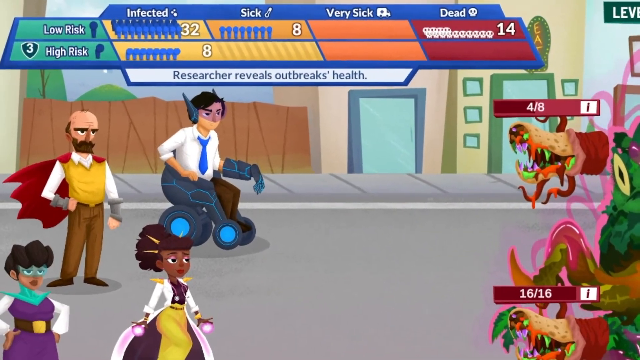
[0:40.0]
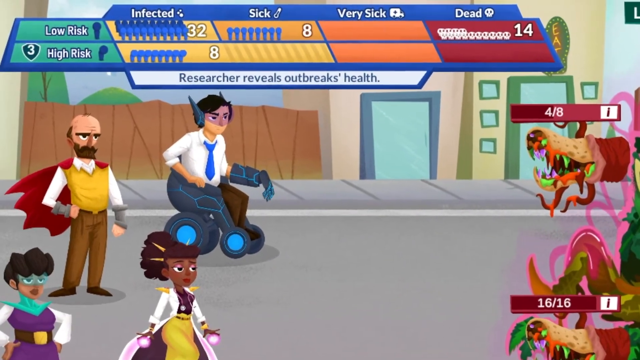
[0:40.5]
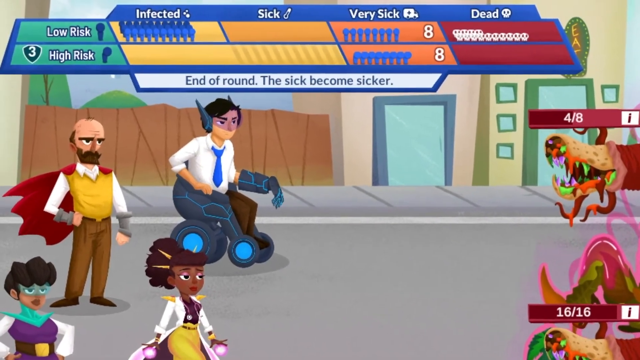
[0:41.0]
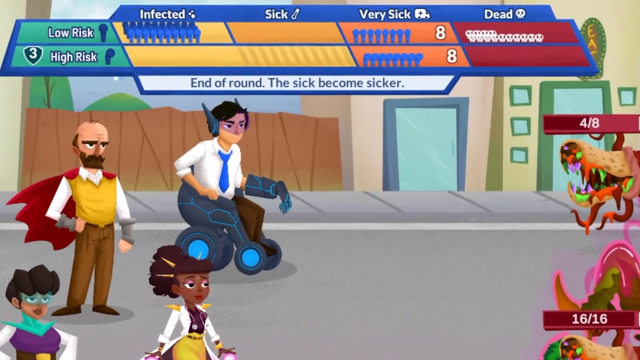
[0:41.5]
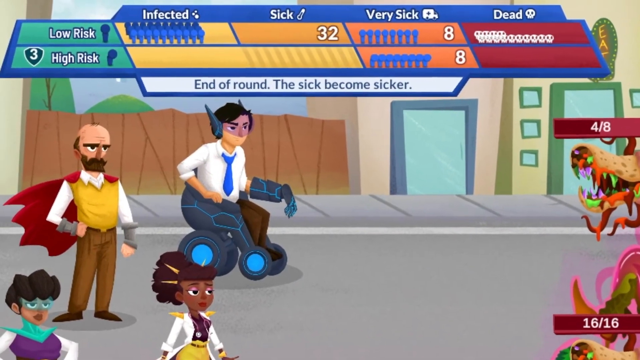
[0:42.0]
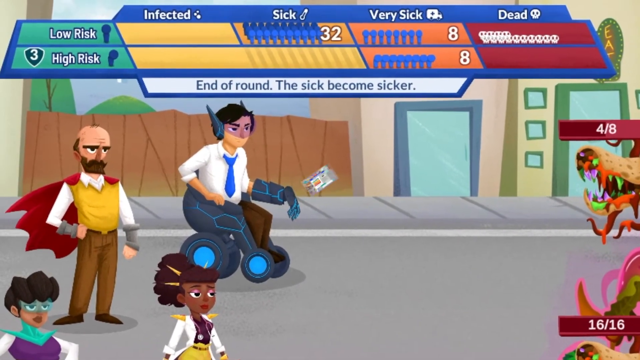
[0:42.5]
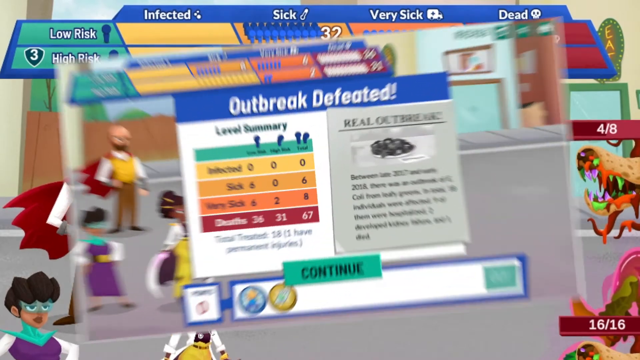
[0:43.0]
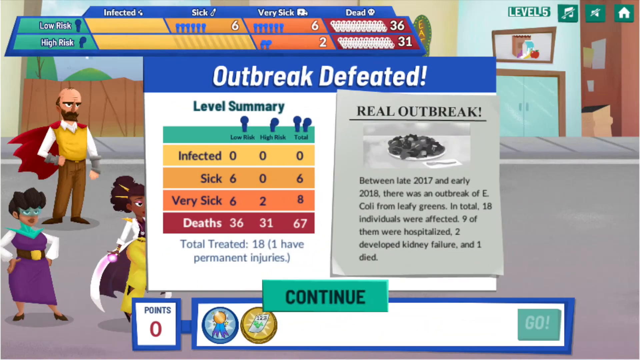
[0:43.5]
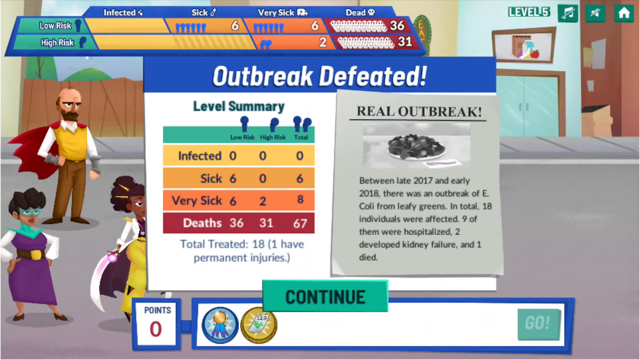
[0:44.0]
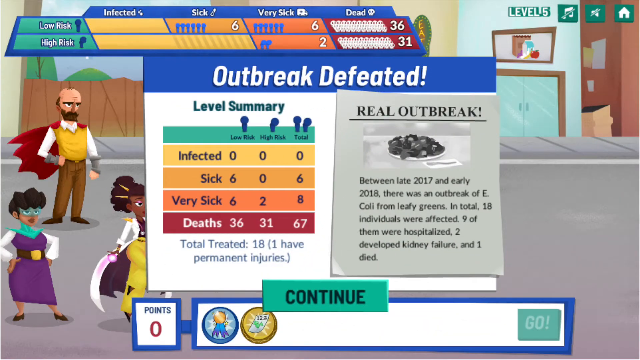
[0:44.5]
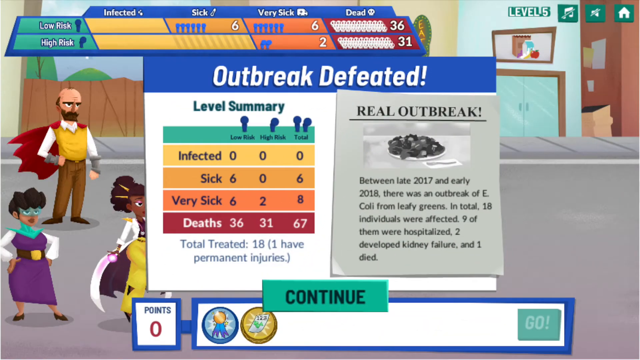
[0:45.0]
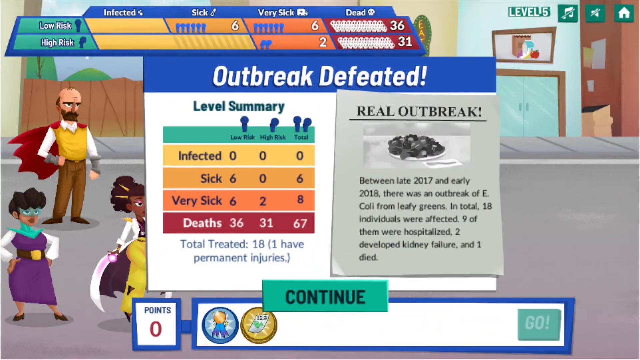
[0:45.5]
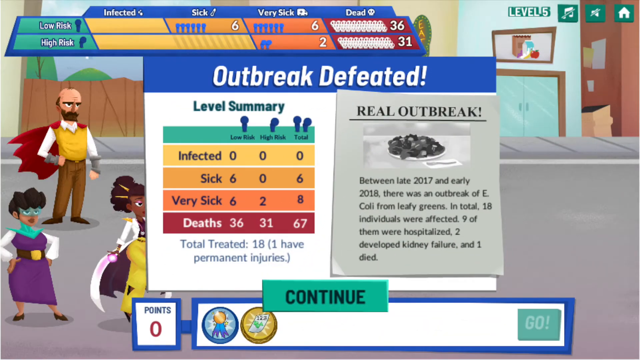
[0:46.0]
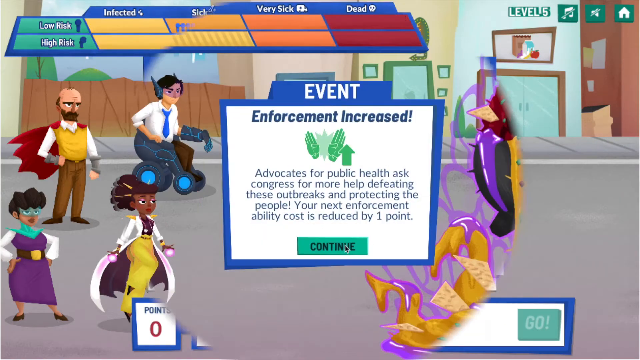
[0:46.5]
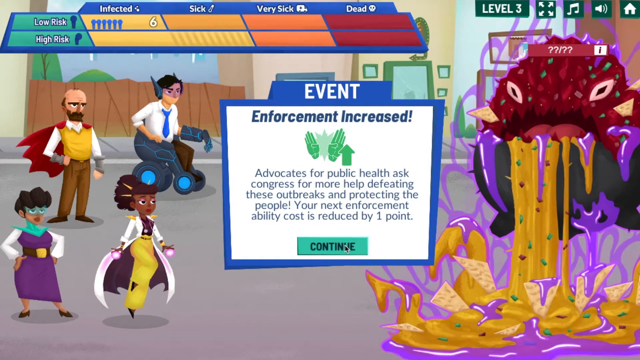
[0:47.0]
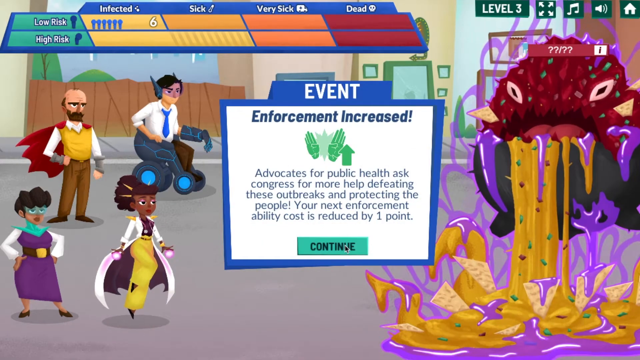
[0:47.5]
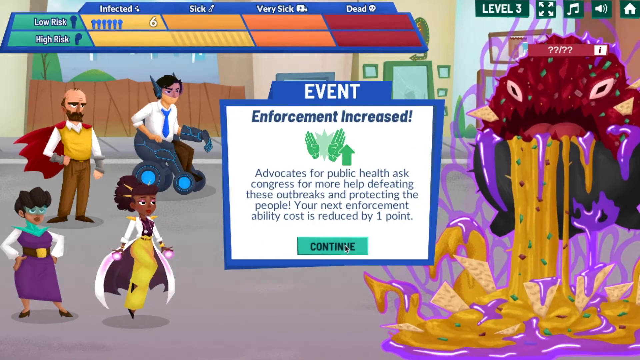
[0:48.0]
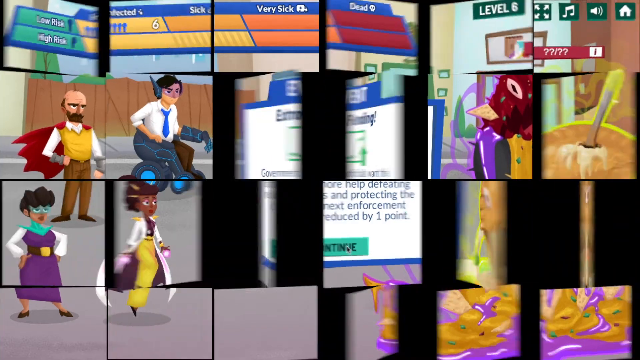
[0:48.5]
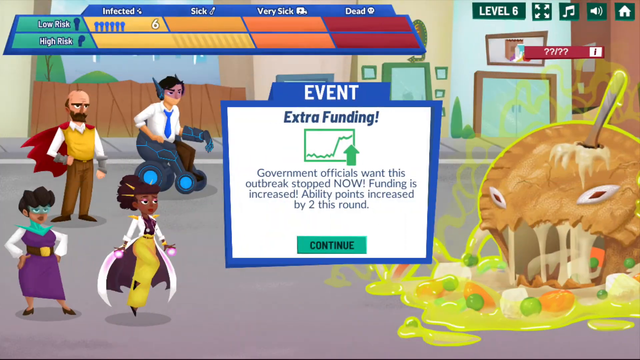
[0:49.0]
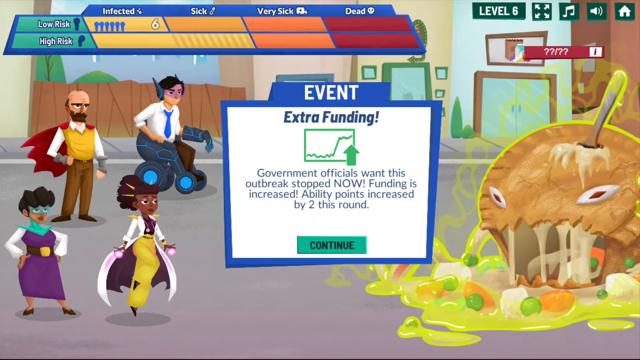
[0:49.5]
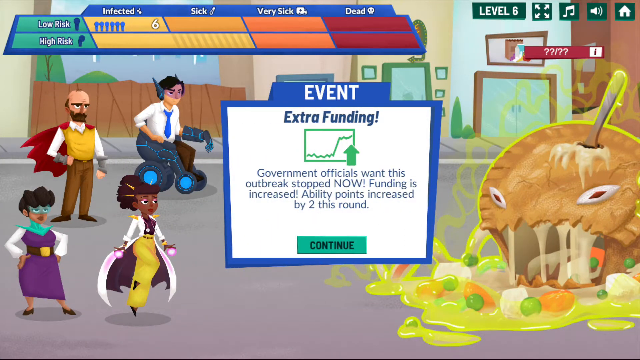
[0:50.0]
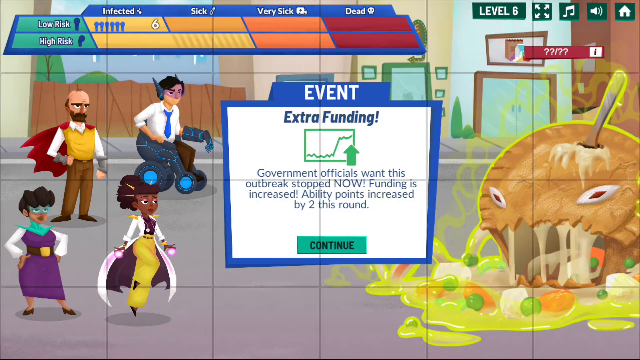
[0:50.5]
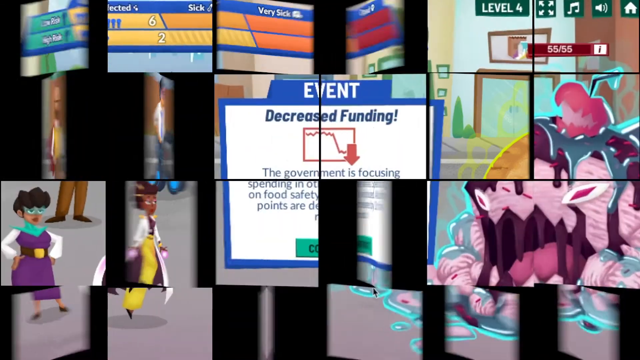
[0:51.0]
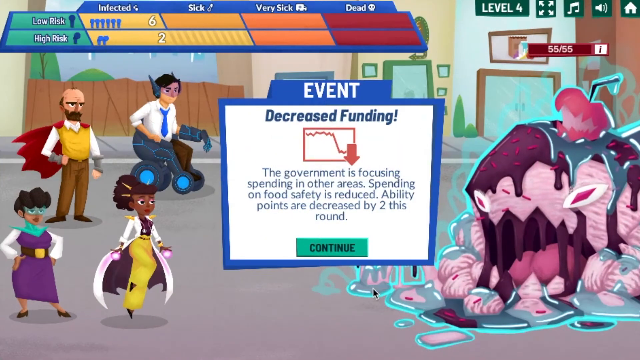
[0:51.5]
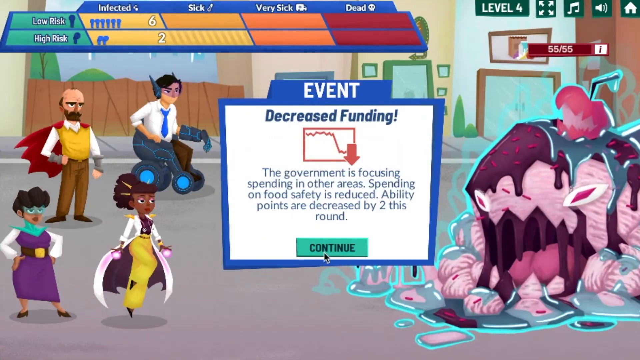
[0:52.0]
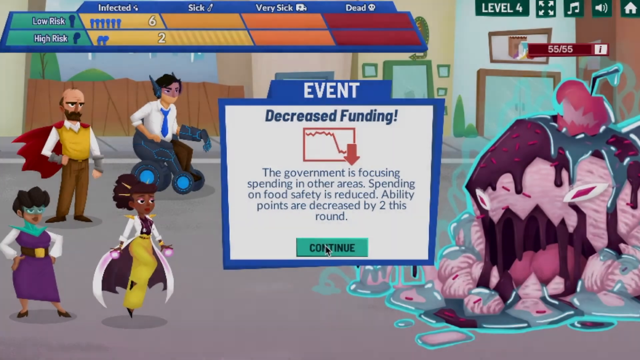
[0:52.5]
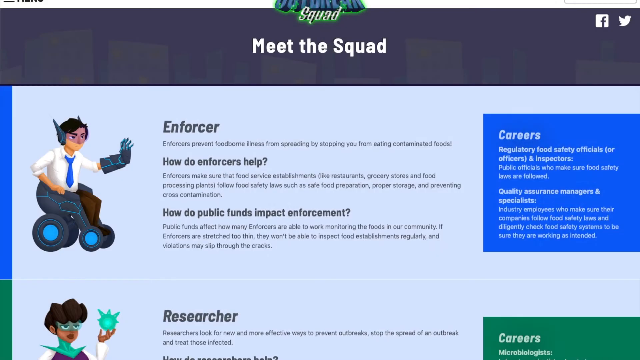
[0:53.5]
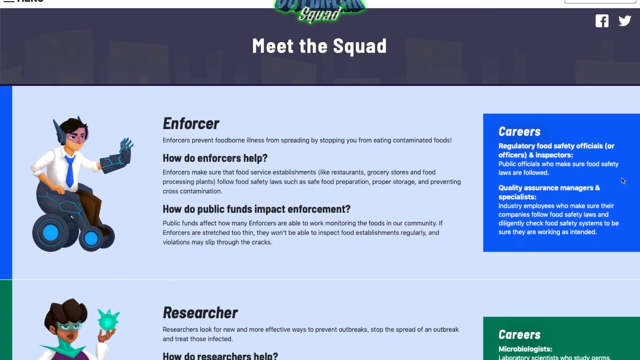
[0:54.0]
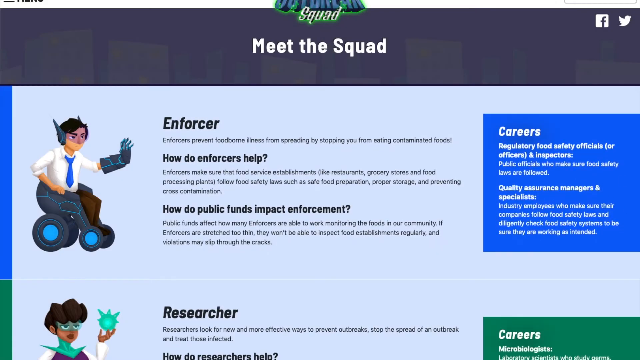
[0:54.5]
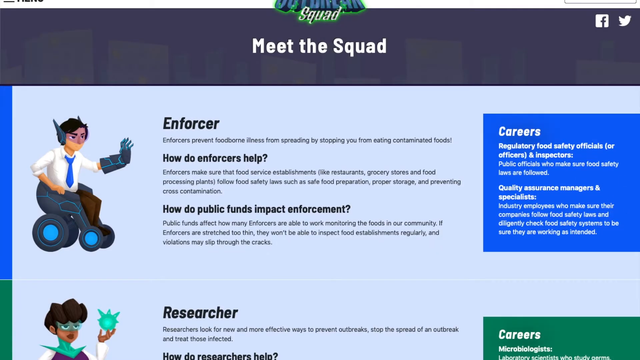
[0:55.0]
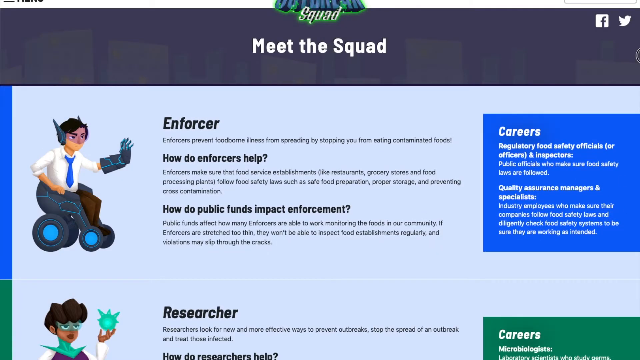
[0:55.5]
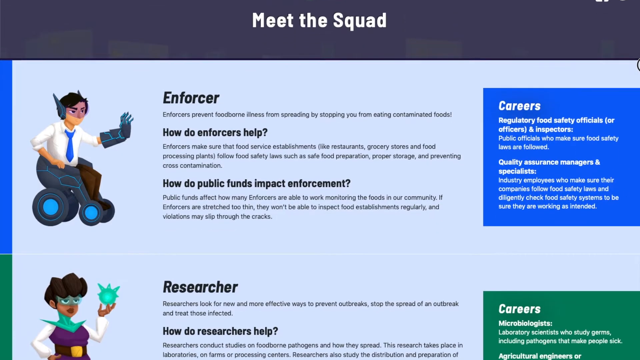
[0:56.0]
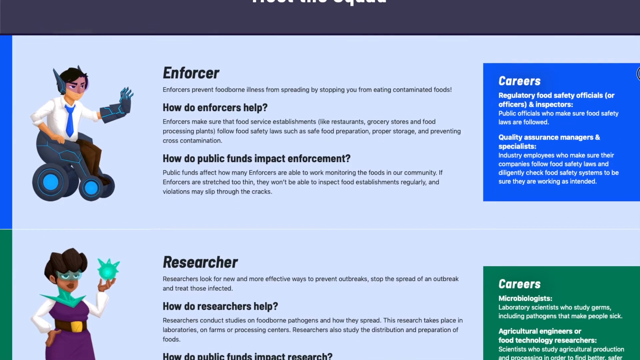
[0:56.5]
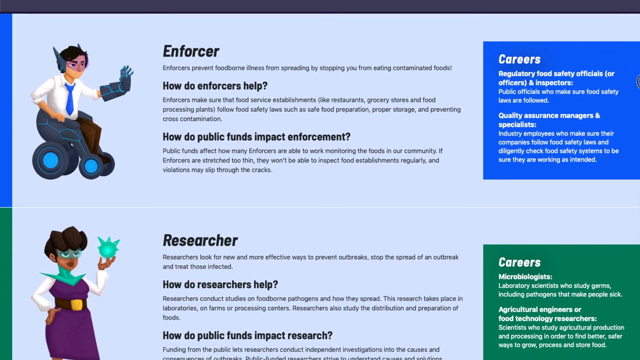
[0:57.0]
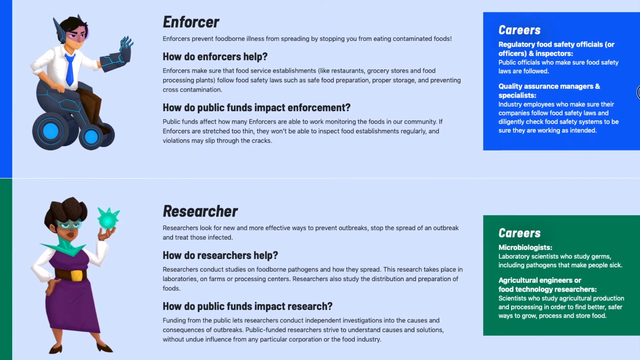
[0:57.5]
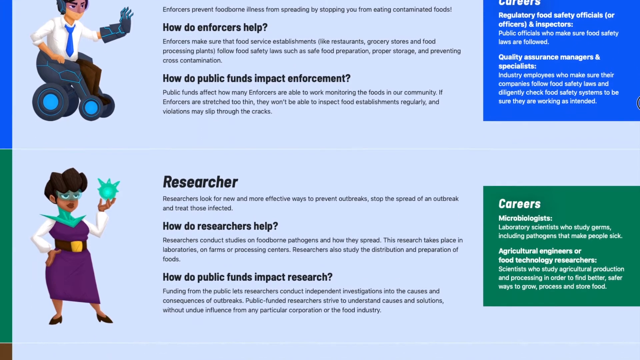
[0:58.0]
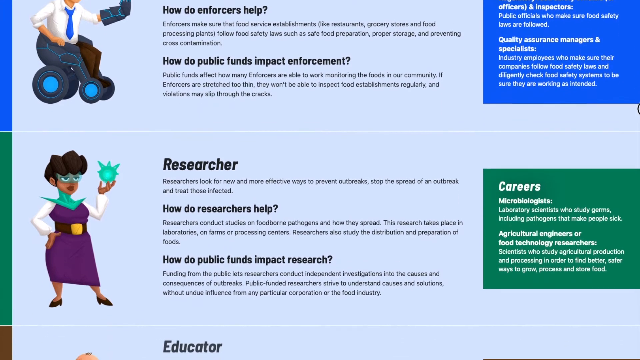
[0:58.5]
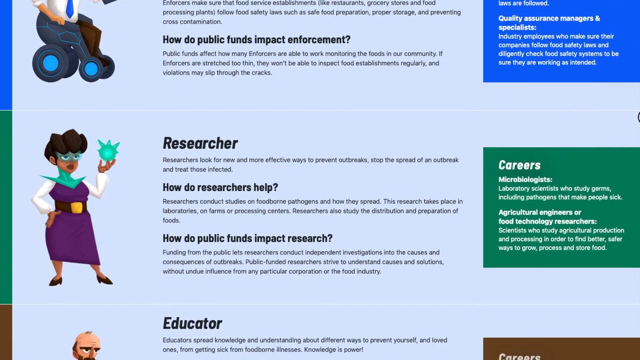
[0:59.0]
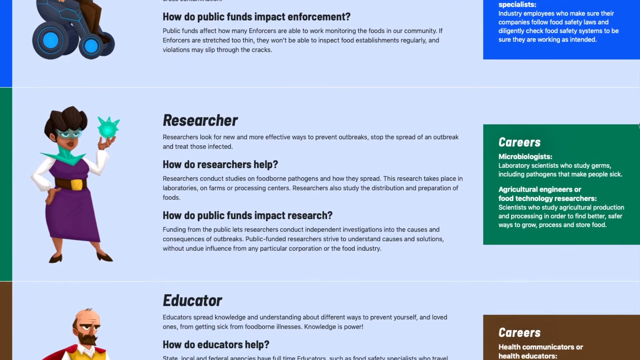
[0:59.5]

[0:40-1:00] A very busy graphic begins with the four superheroes at one side of the screen. Enforcement, in his white shirt and blue tie, also has brown trousers; he appears to be in some sort of motorized chair with a larger back wheel than front wheel, and he seems to have a bionic left arm. The graphic "Outbreak Defeated" comes up on the screen, along with a level summary with information in banners across the left half of the page: infected, sick, very sick and deaths. On the other side of the screen is information about a real outbreak, which says "between late 2017 and early 2018, there was an outbreak of E. coli from leafy greens. In total, 18 individuals were affected, nine were hospitalized, two developed kidney failure and one died." Next comes a graphic with a square at the center reading "enforcement increased. Advocates for public health ask Congress for more help defeating these outbreaks and protecting the people. Your next enforcement ability cost is reduced by one point.", with a continue button. Other squares with other chance-type options in the game are shown. Further text follows, with the heading "meet the squad".